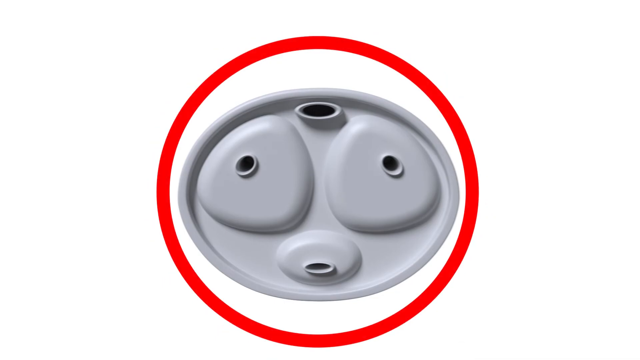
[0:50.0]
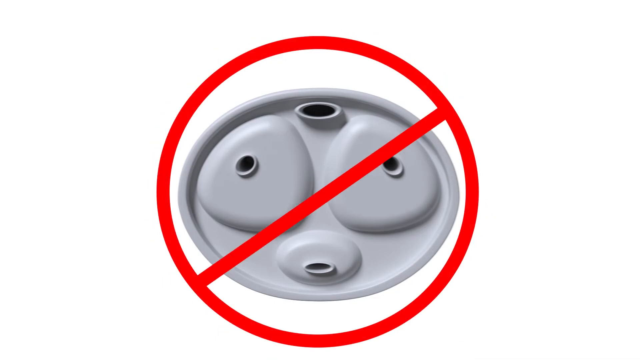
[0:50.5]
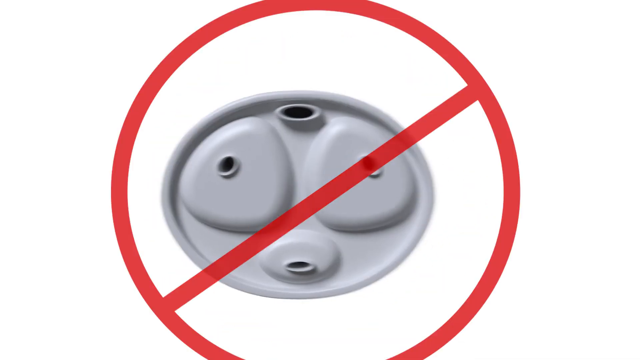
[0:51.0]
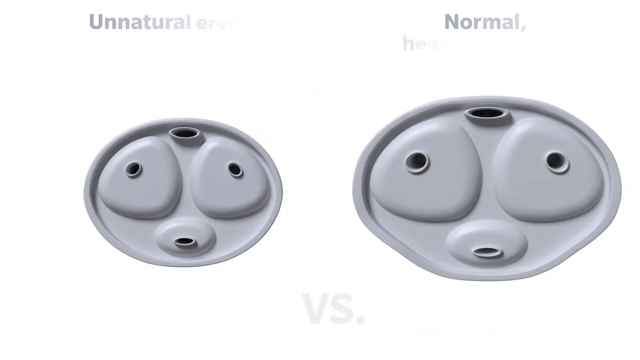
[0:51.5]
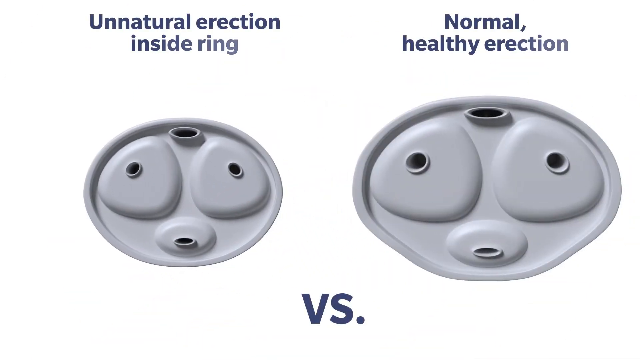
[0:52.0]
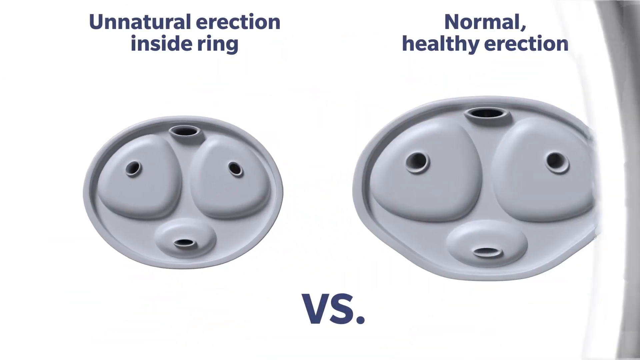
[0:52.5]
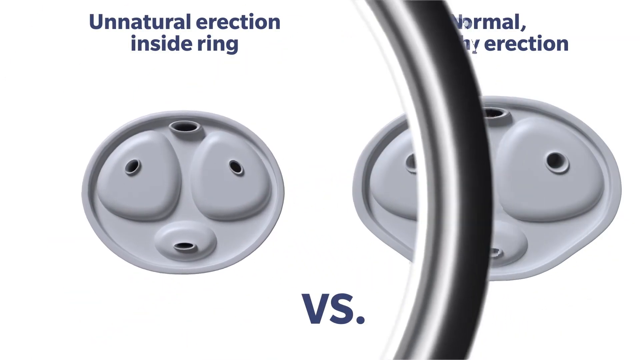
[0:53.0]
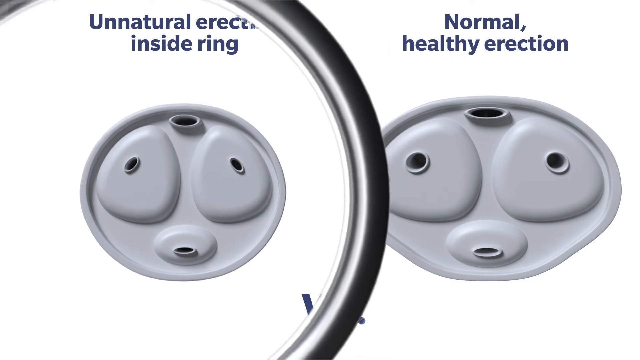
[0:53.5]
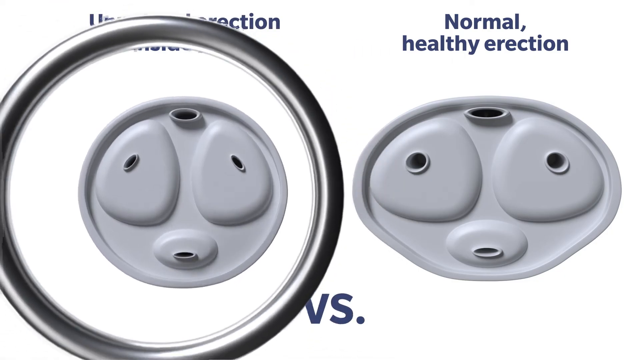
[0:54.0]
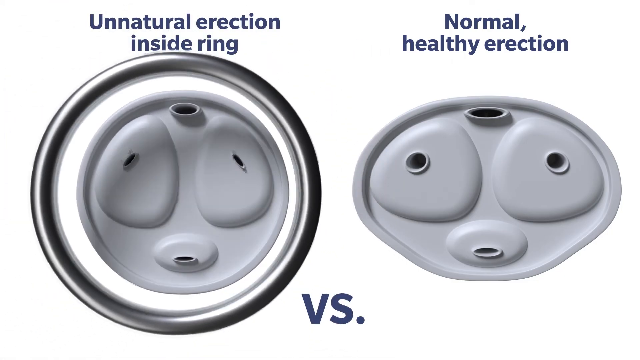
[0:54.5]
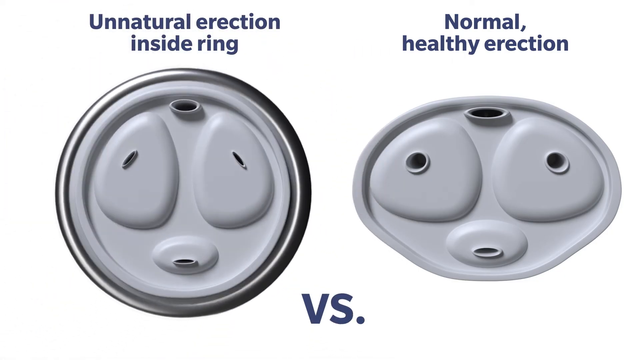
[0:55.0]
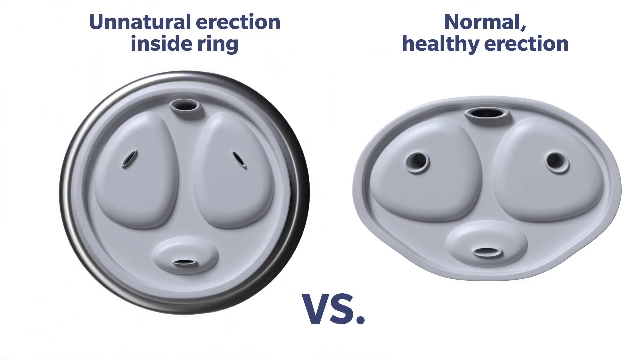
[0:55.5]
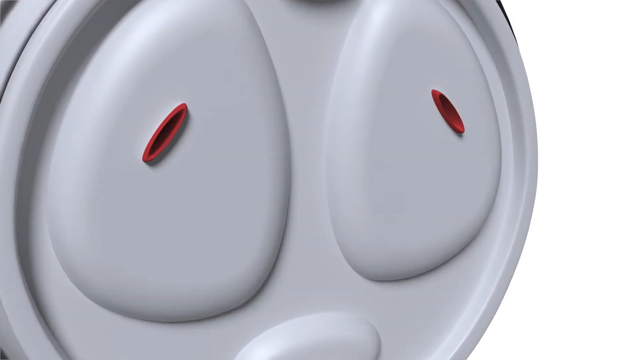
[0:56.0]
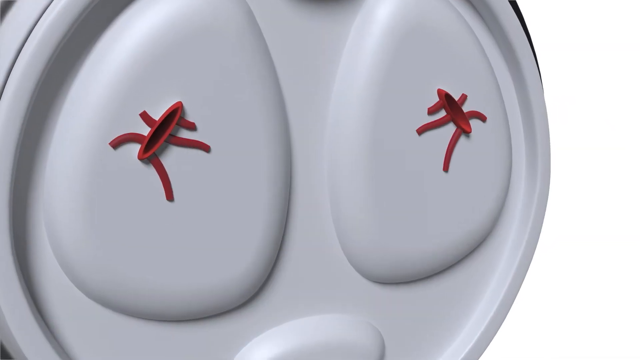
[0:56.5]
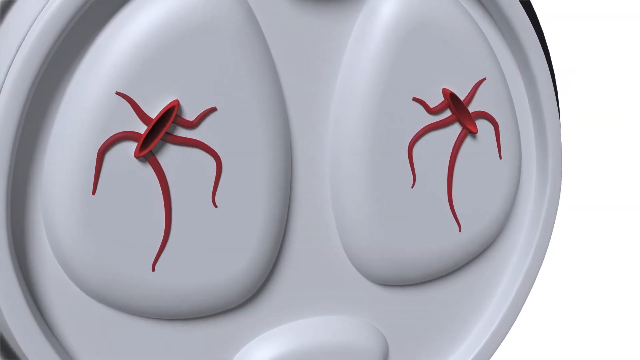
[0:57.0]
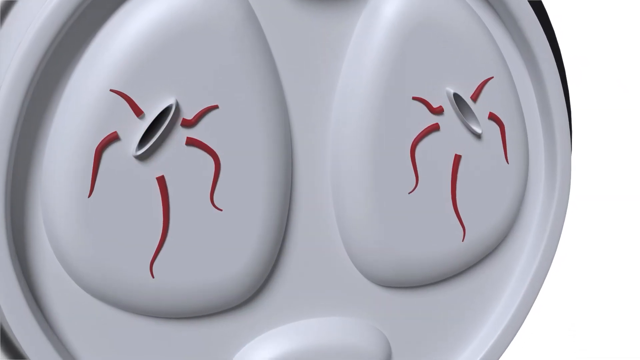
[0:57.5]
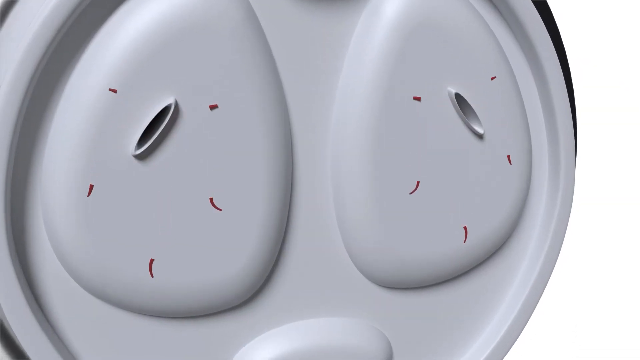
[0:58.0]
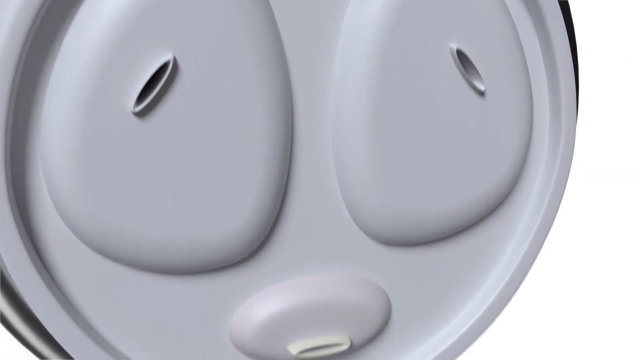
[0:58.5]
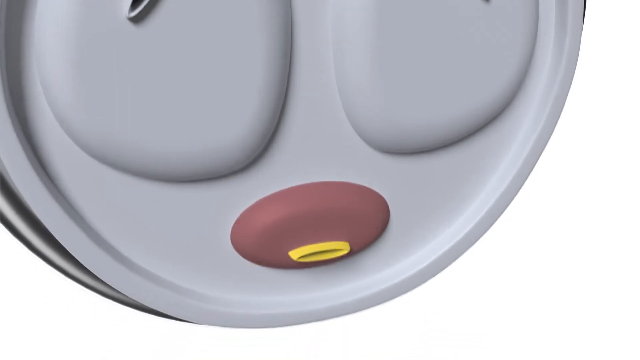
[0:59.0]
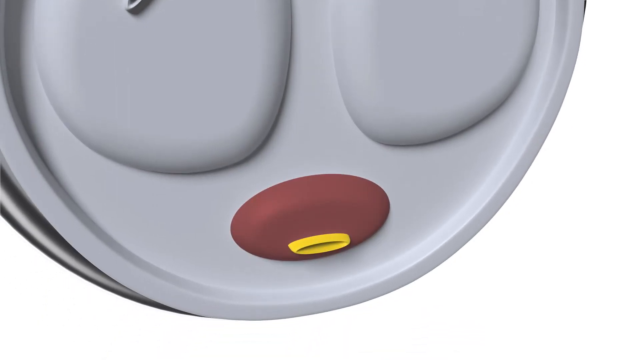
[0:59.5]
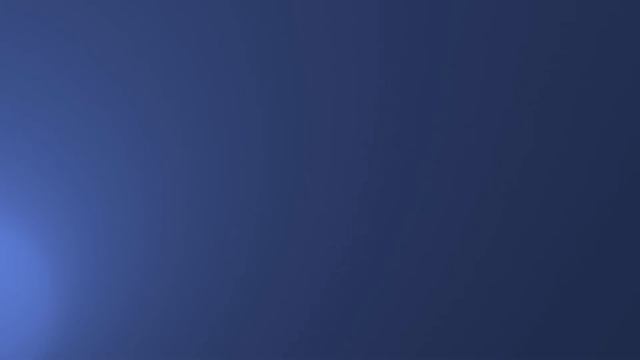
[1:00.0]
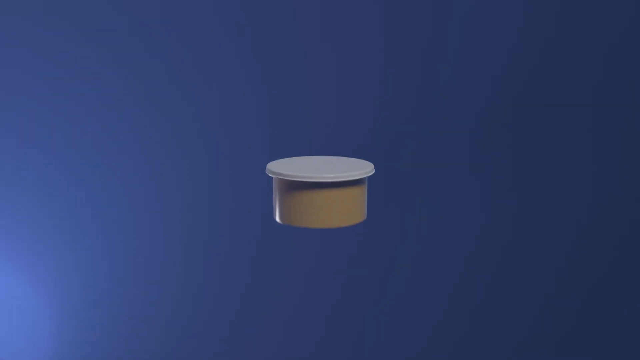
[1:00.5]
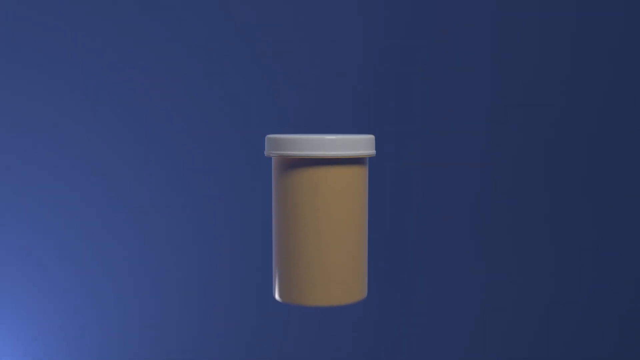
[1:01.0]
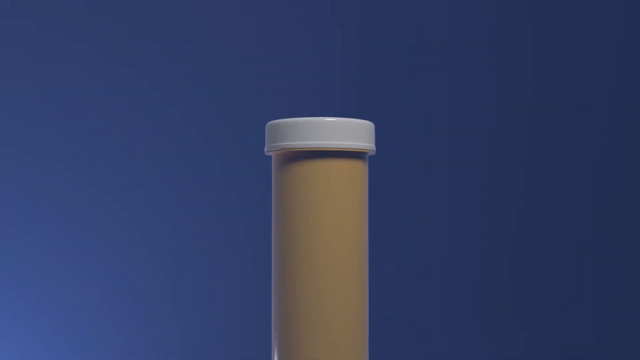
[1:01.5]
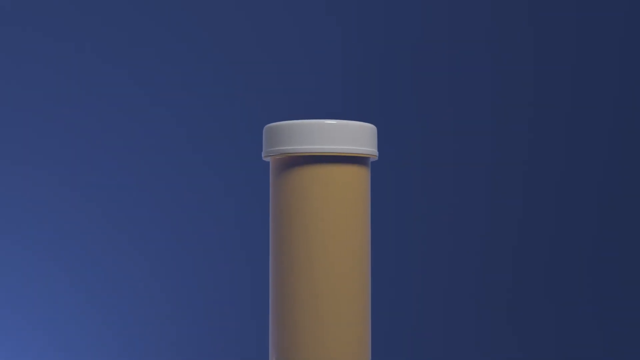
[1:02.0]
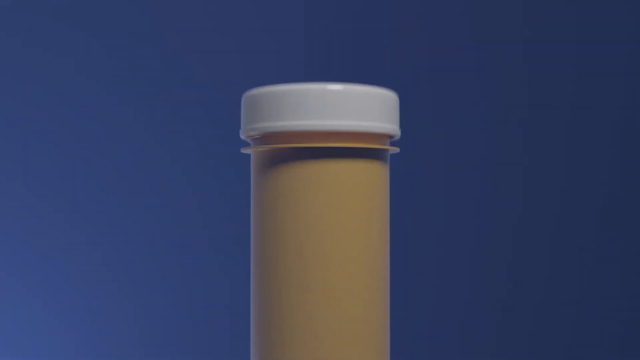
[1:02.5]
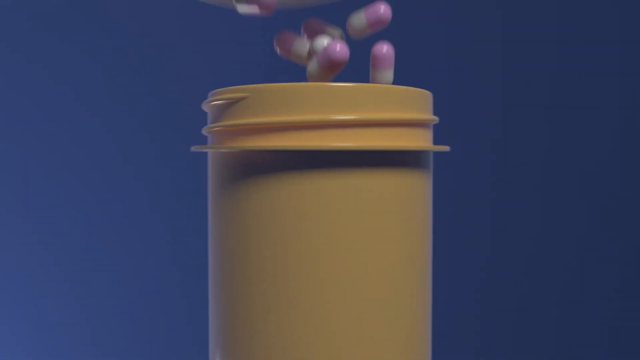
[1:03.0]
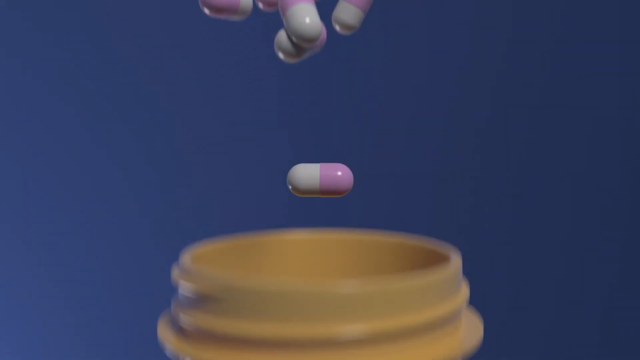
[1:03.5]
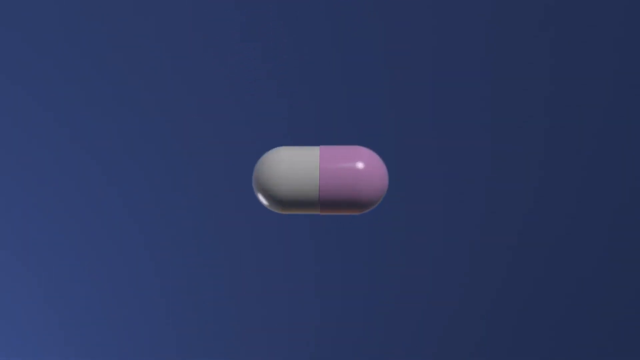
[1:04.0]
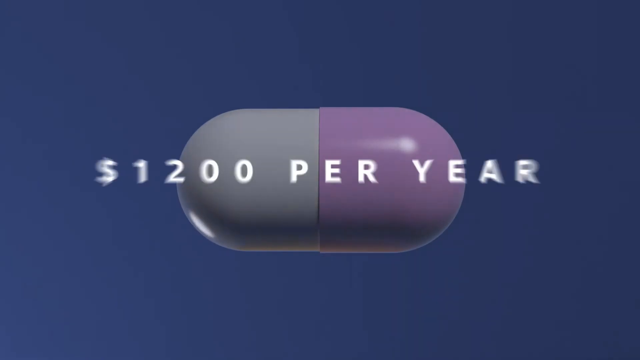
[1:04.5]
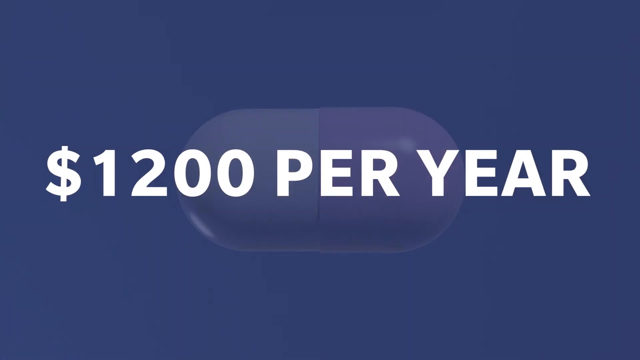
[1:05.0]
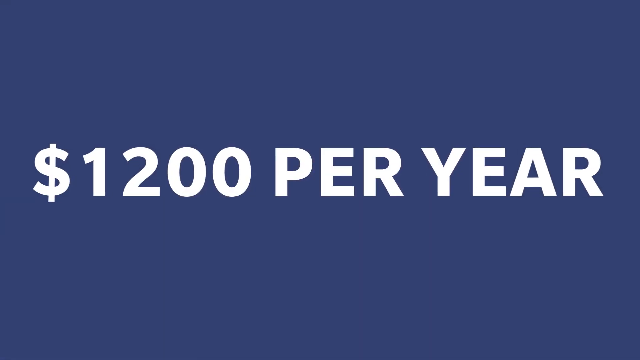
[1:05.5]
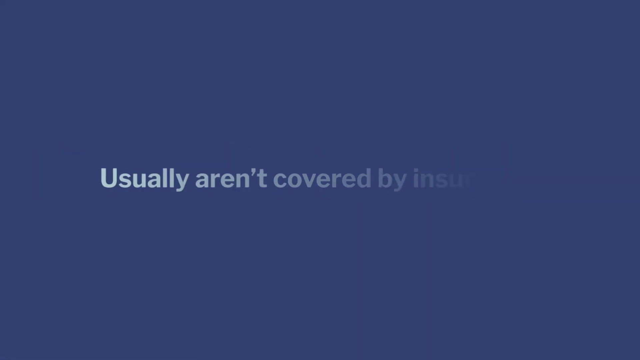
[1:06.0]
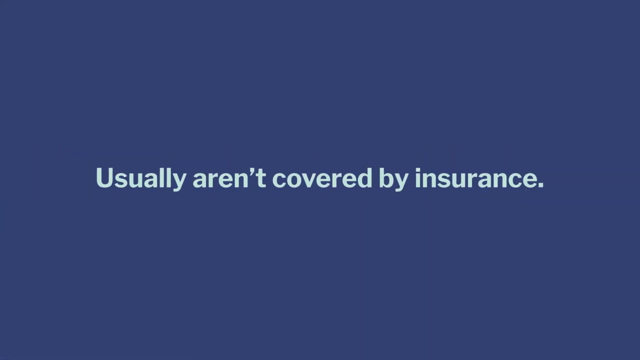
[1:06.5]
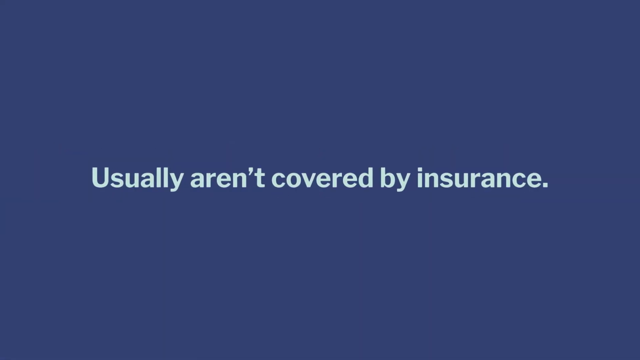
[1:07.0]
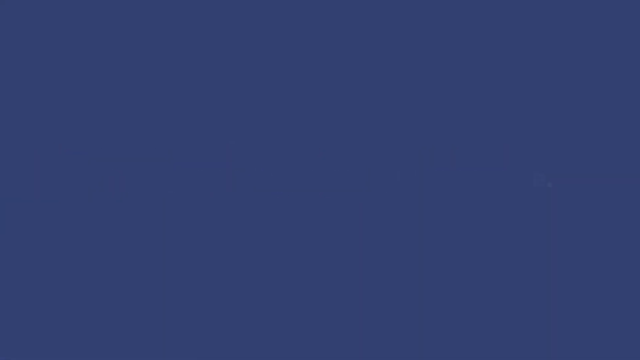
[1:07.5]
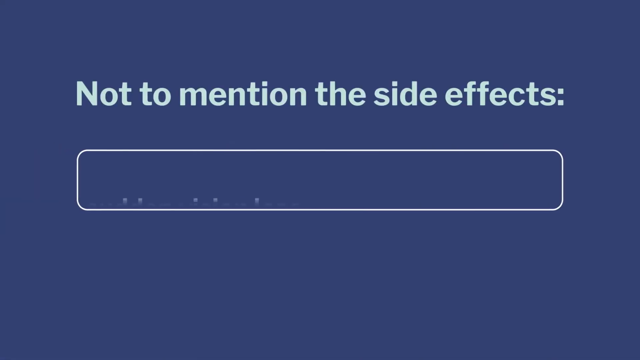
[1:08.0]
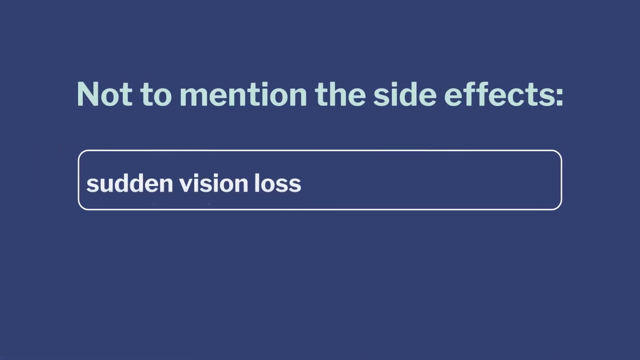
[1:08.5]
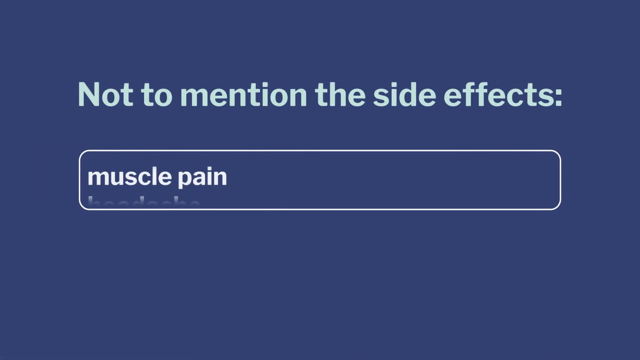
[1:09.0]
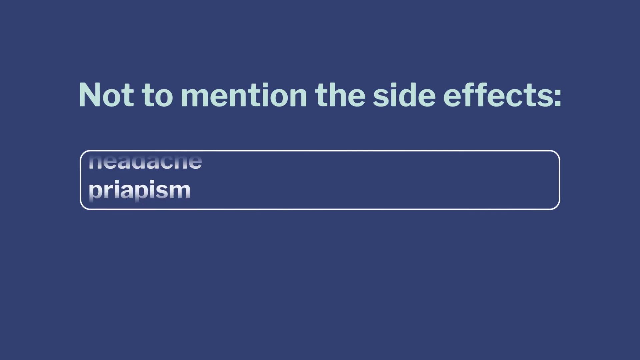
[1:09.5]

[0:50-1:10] An erection inside the ring is compared against a normal, healthy erection. The blood vessels are shown spidering and getting full circulation, while the inner part of the urethra turns very yellow and the outside part becomes red and inflamed. The device is shown around the erection. A bottle of pills then appears with writing that says "$1,200 a year," followed by a list of negative side effects, including headaches, dizziness and a number of others, presenting the disadvantages of using medication.